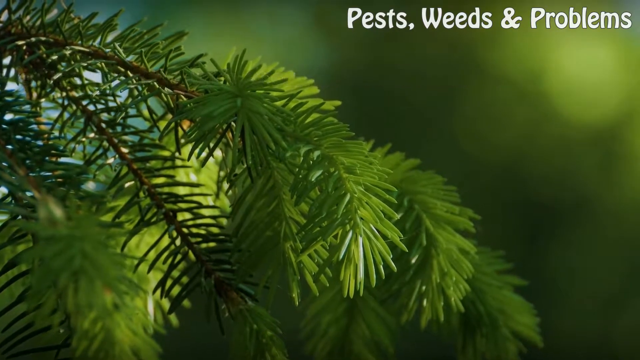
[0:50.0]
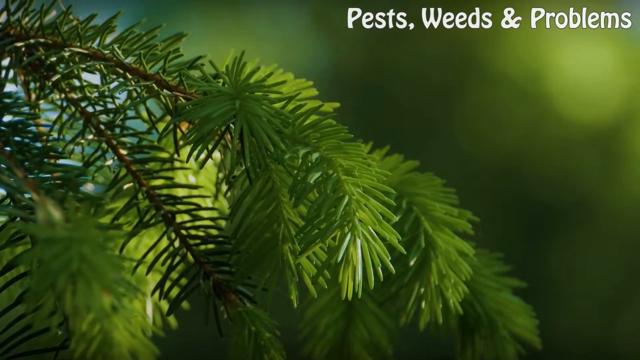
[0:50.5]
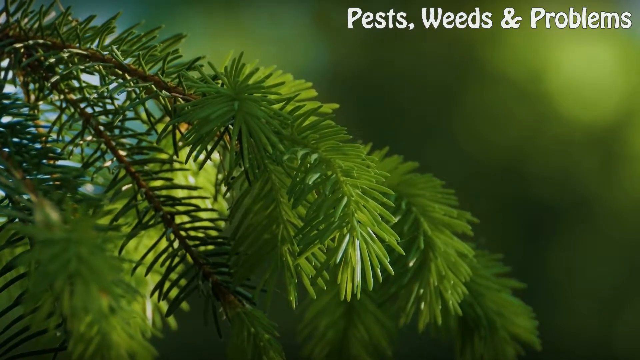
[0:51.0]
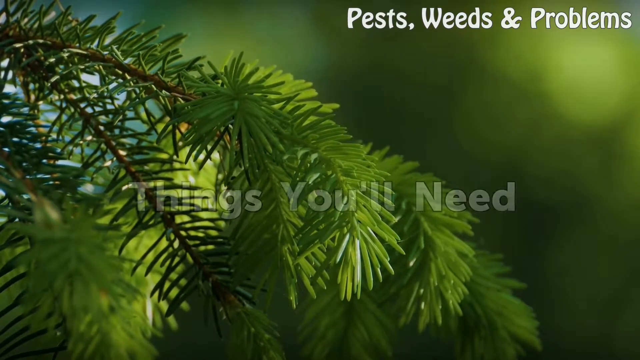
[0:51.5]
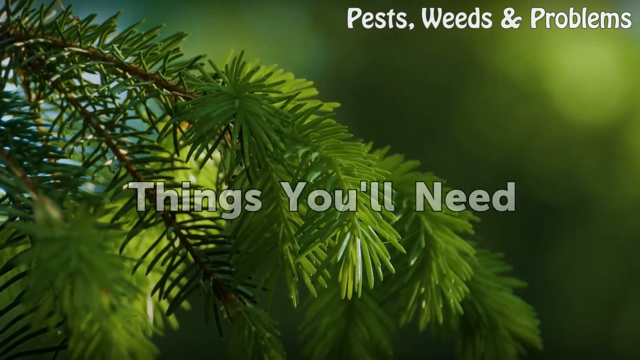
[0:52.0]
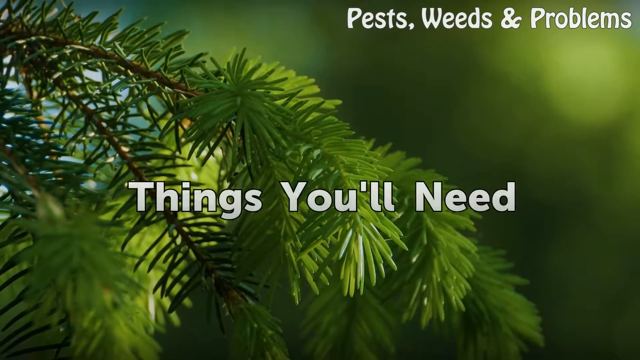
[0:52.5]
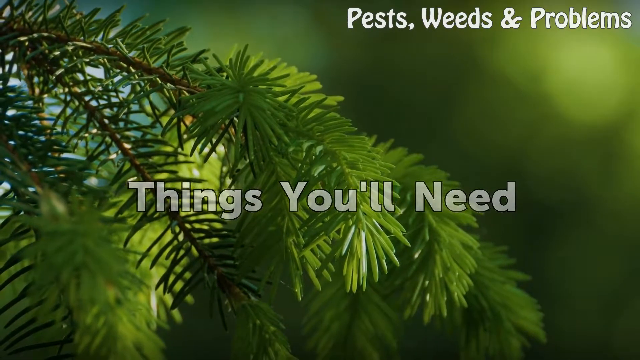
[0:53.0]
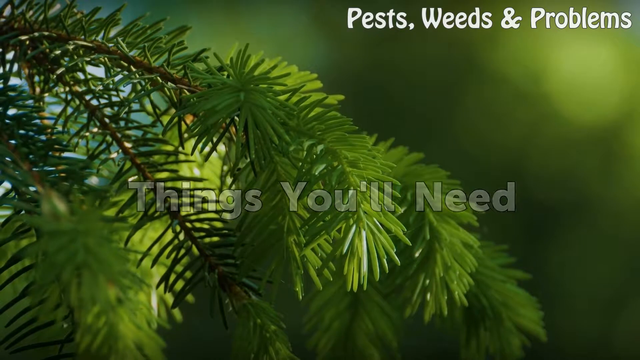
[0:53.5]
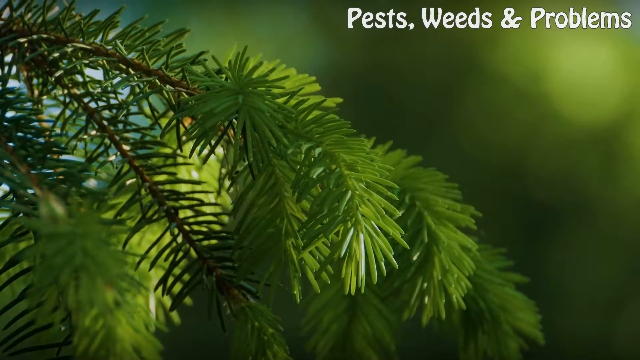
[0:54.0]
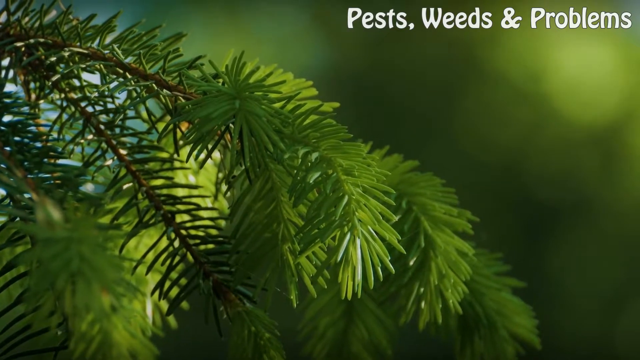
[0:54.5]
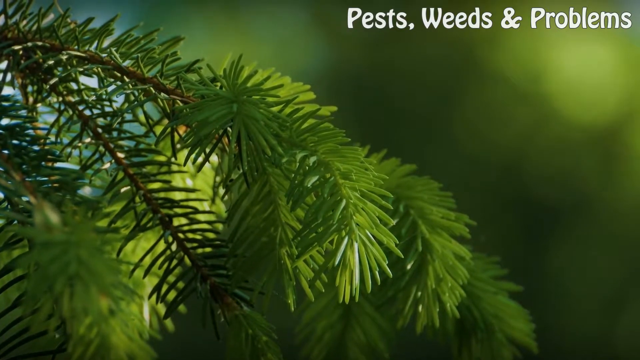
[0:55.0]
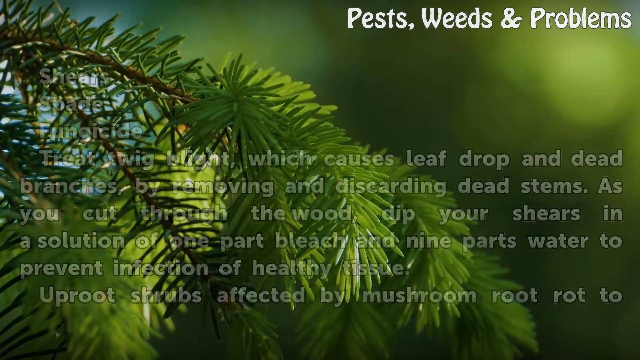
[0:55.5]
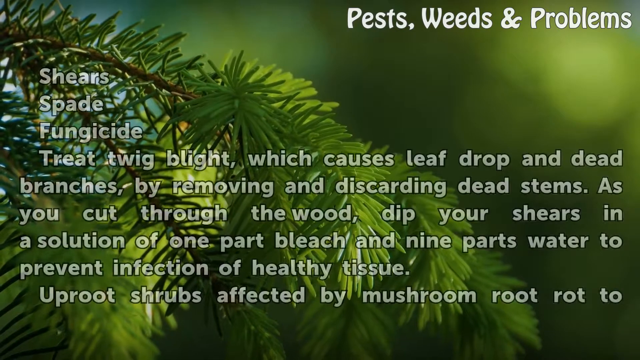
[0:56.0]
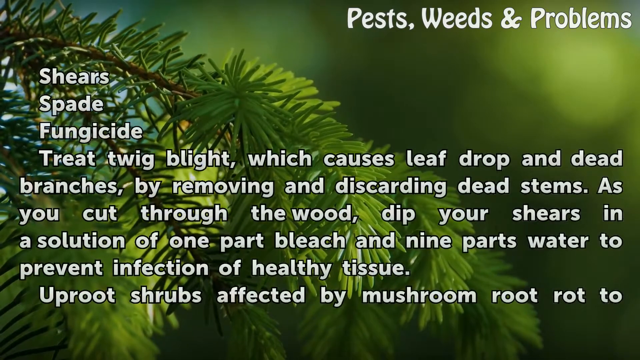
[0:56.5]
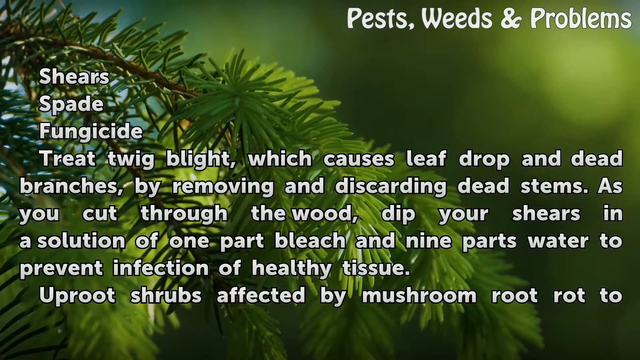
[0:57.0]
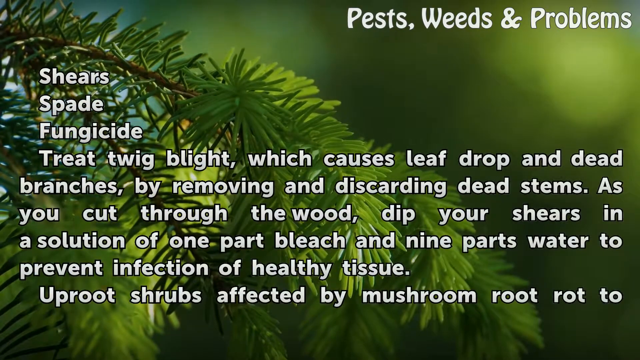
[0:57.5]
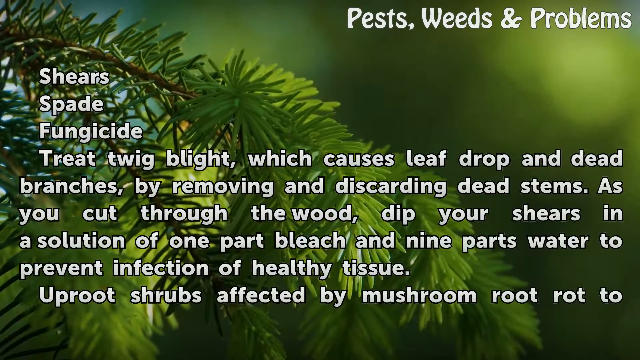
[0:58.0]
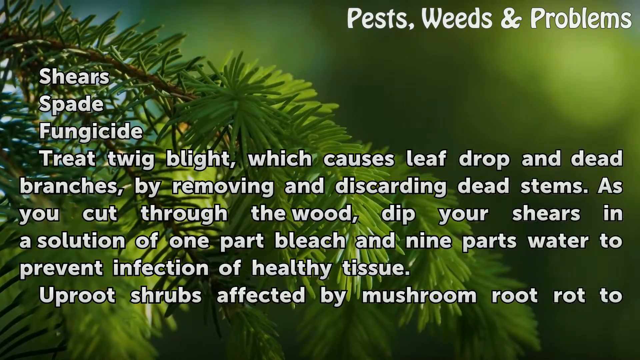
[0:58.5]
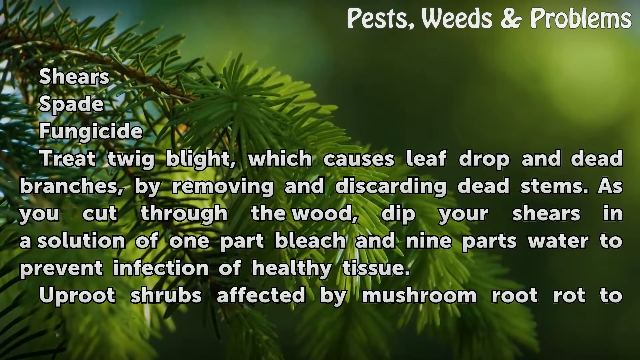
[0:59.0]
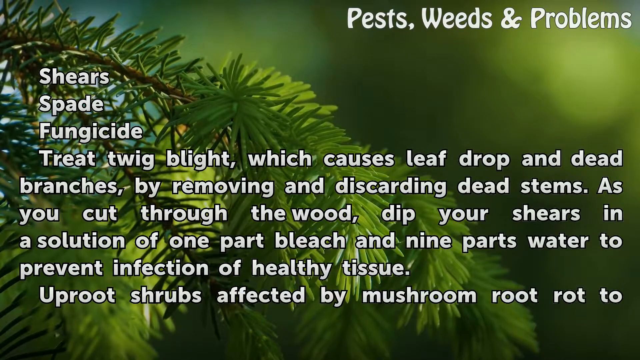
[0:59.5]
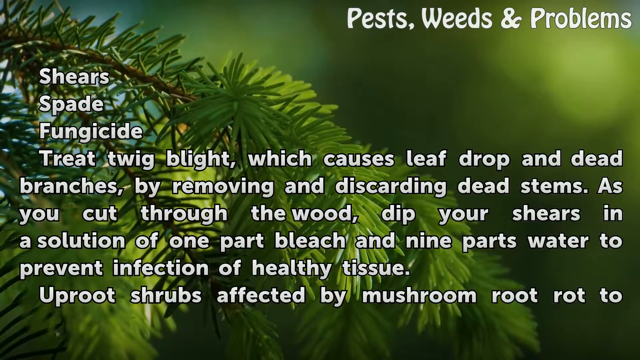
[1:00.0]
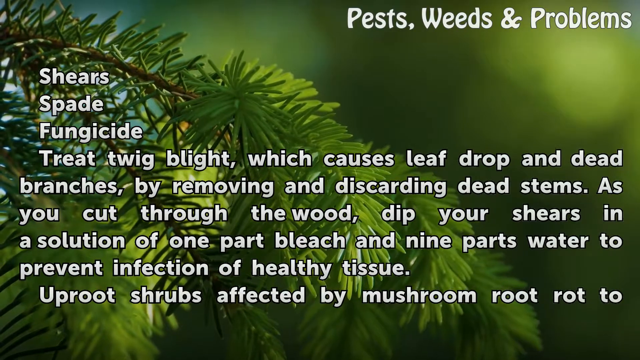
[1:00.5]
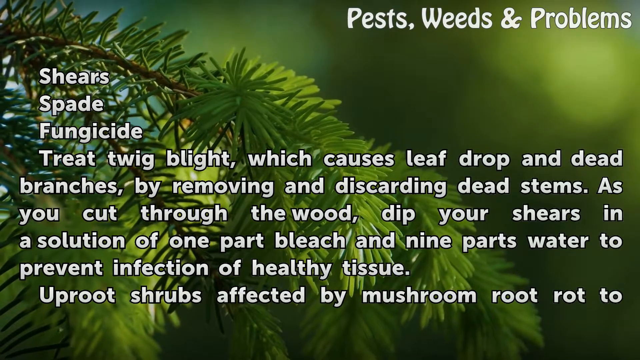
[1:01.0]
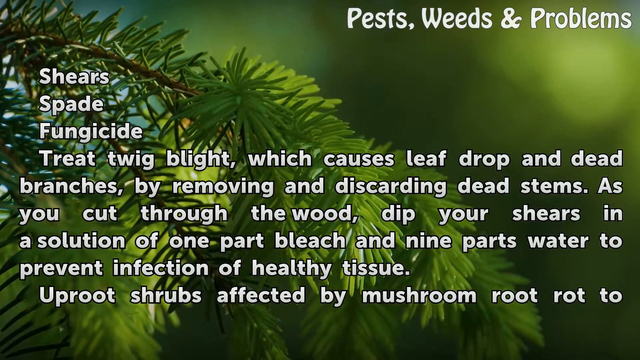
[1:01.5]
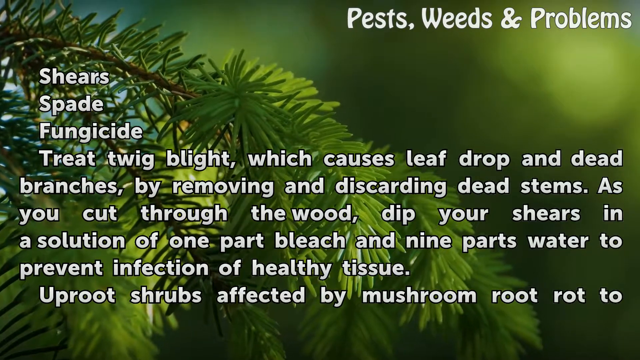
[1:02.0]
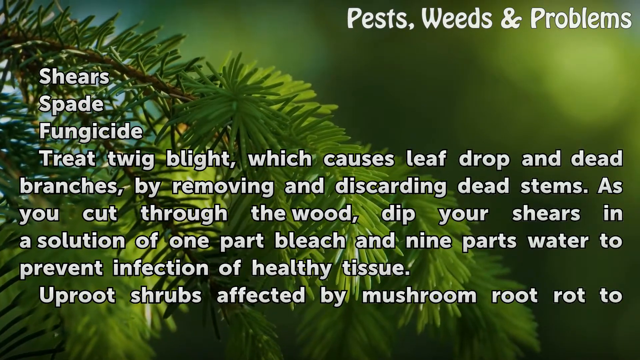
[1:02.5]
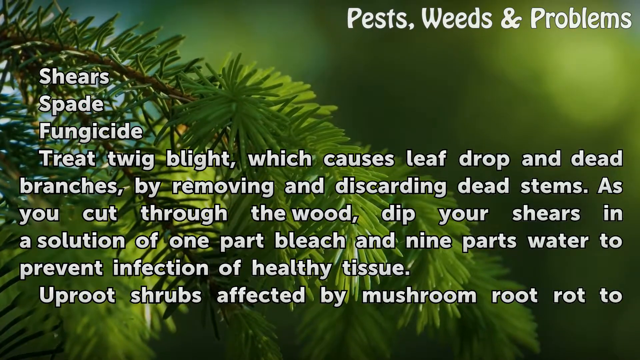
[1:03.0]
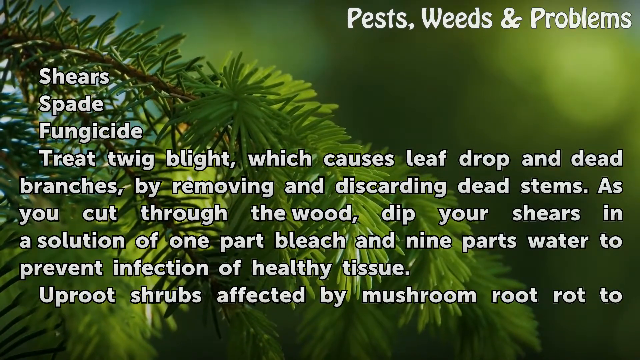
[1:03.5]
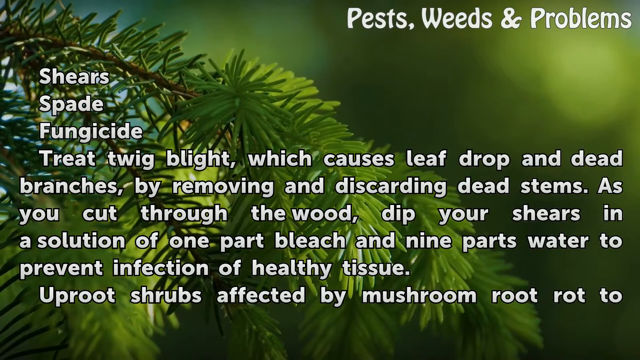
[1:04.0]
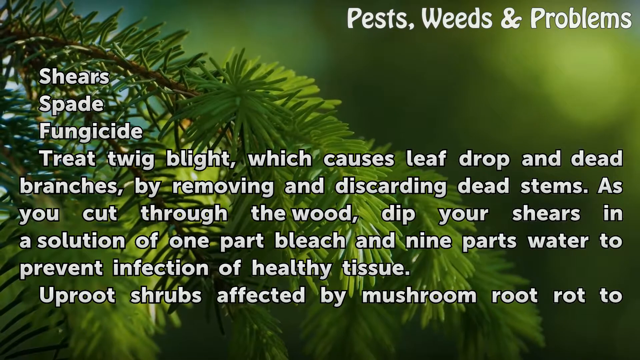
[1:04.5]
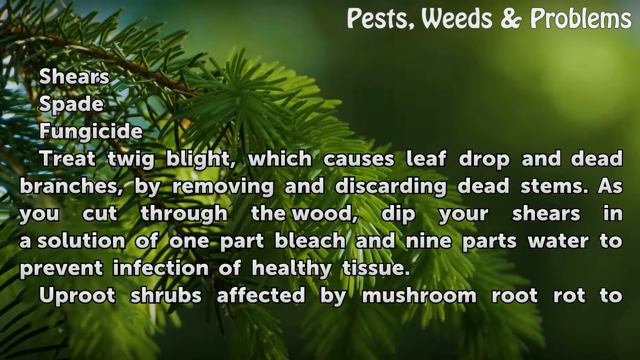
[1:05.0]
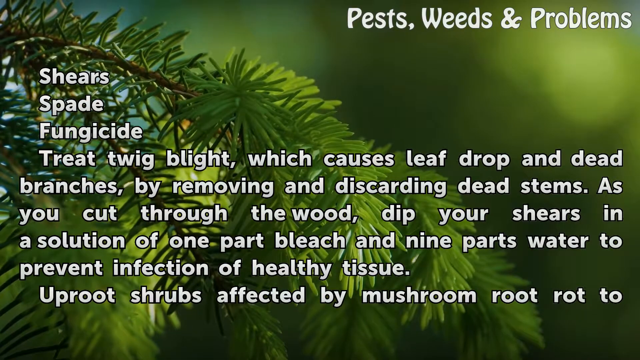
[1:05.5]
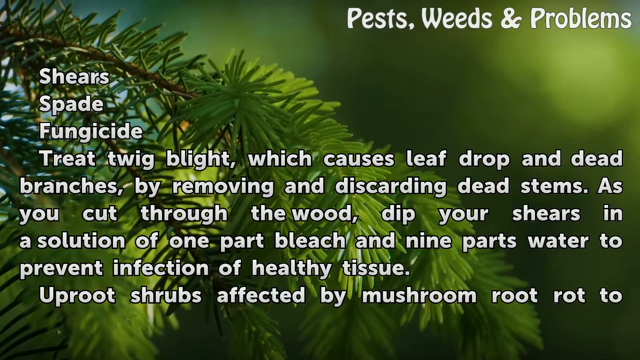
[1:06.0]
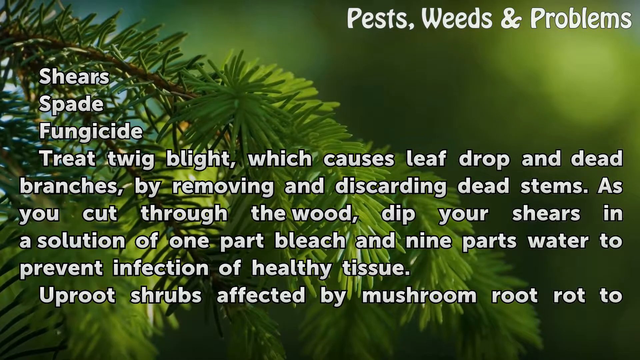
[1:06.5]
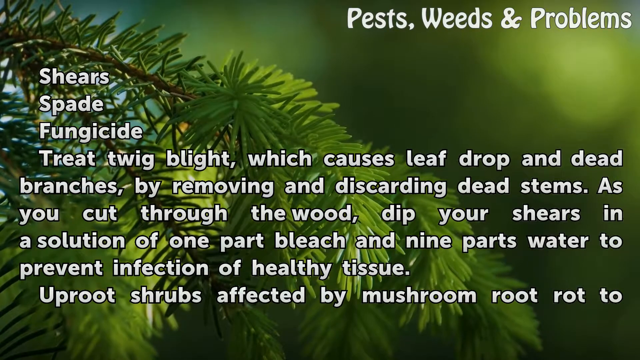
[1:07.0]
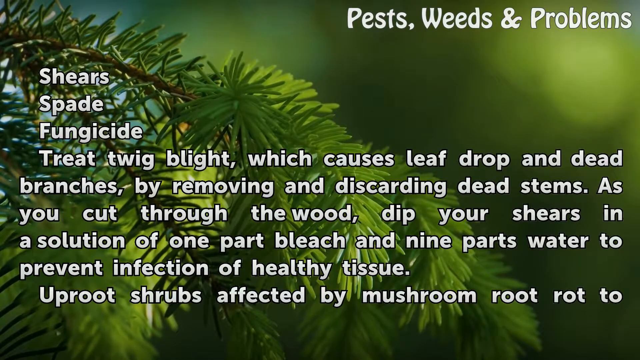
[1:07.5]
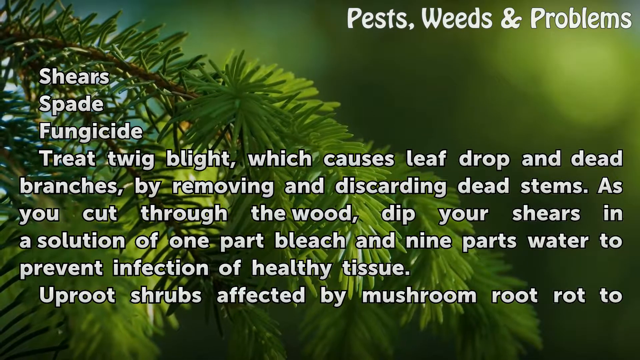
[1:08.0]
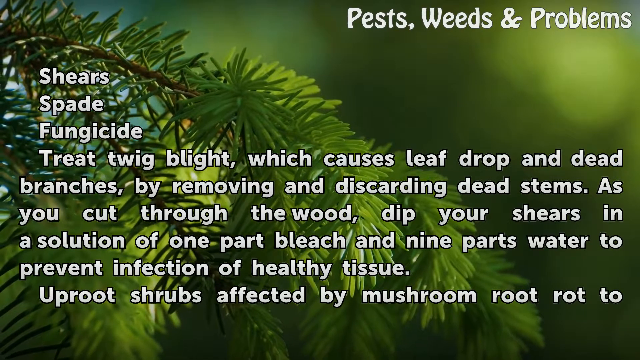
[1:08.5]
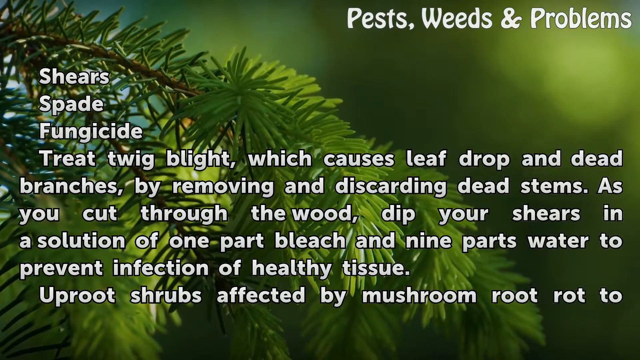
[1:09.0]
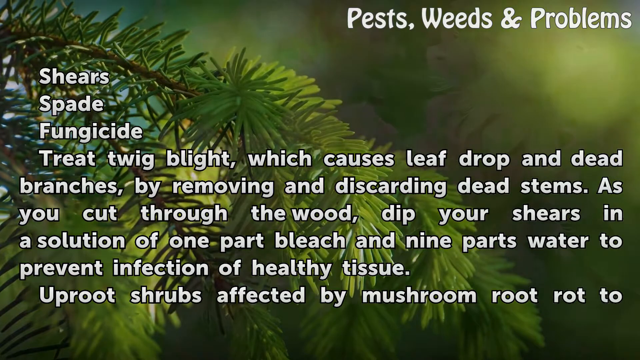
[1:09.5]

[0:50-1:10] A close-up image of pine branches fills the background, with the words "PEST, WEED, and PROBLEMS" in white in the top right-hand corner, which remain on the screen the whole time. The words "THINGS YOU'LL NEED" slowly appear in the center of the screen before fading out. Nine lines of text then appear: "Shears", "Spade", "Fungicide", "Treat twig blight, which causes leaf drop and dead", "branches, by removing and discarding dead stems. As", "you cut through the wood, dip your shears in", "a solution of one part bleach and nine parts water to", "prevent infection of healthy tissue" and "Uproot shrubs affected by mushroom root rot to". The text remains on the screen and disappears just before the shot ends.